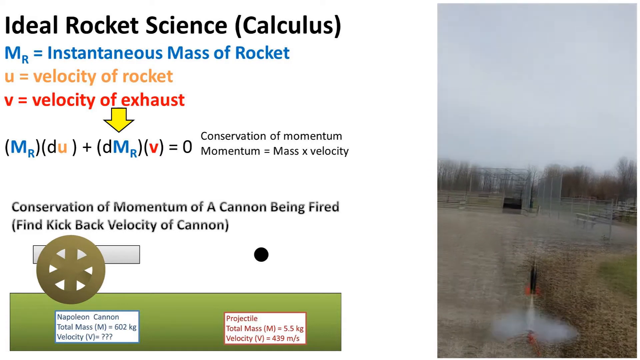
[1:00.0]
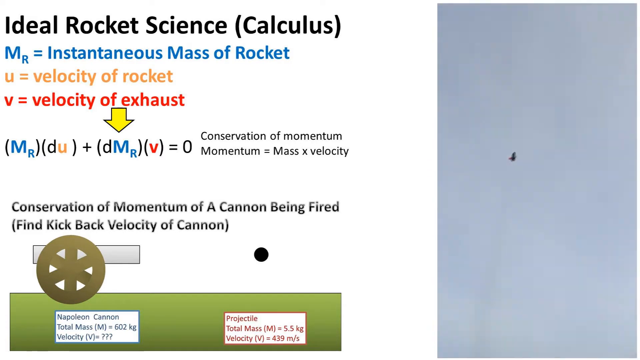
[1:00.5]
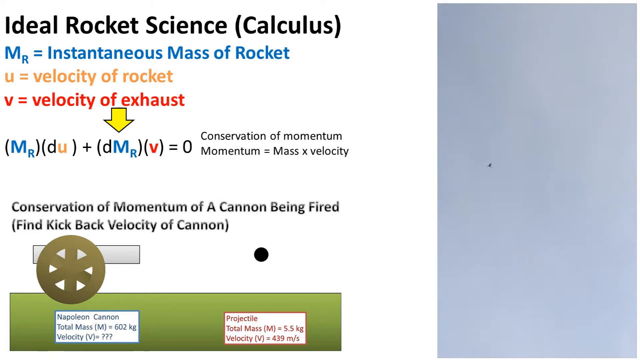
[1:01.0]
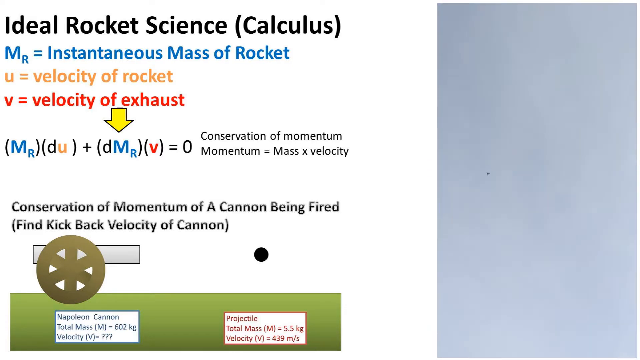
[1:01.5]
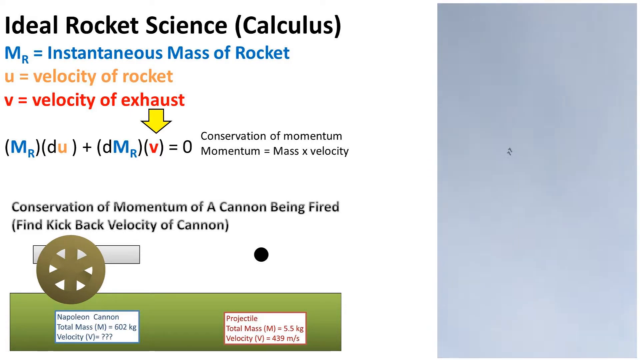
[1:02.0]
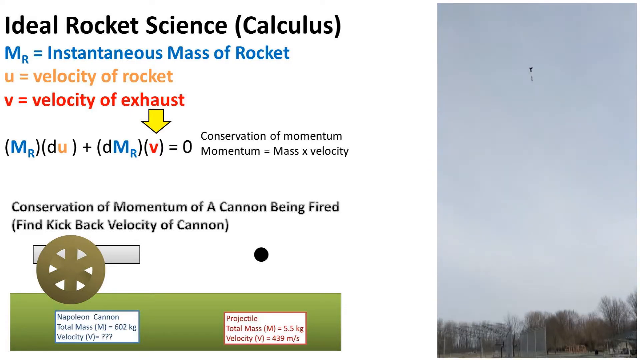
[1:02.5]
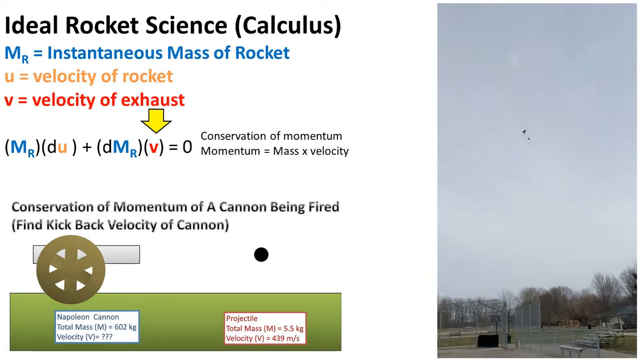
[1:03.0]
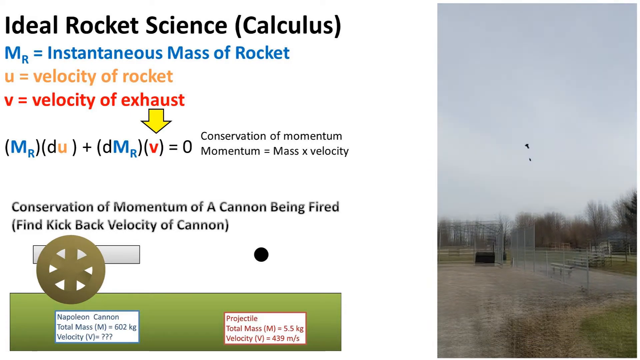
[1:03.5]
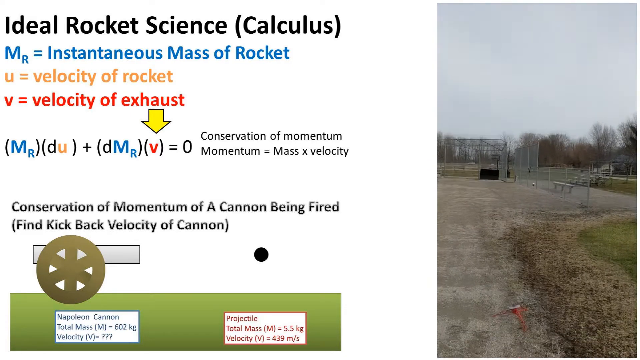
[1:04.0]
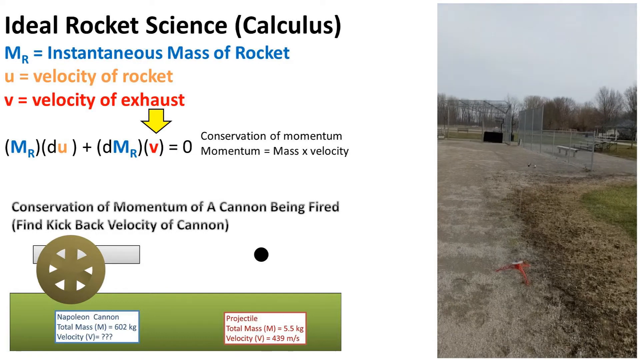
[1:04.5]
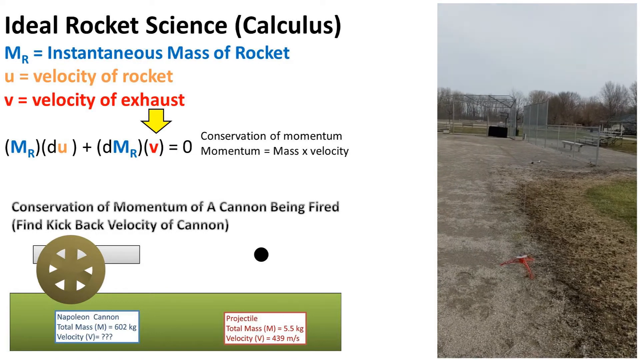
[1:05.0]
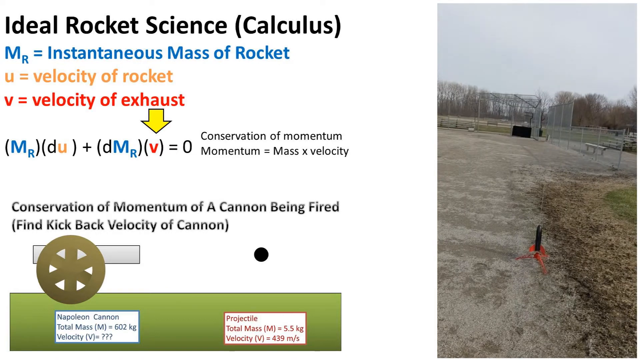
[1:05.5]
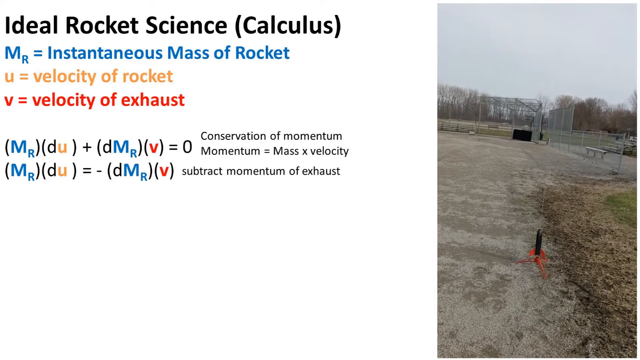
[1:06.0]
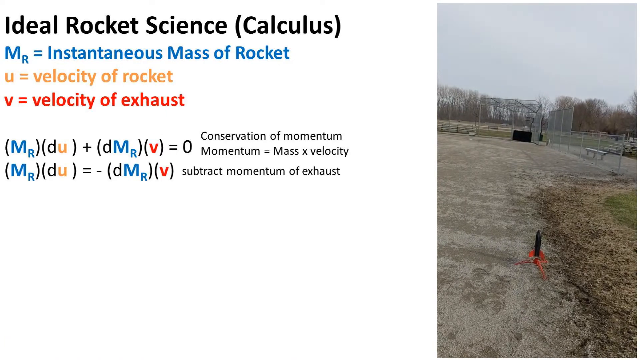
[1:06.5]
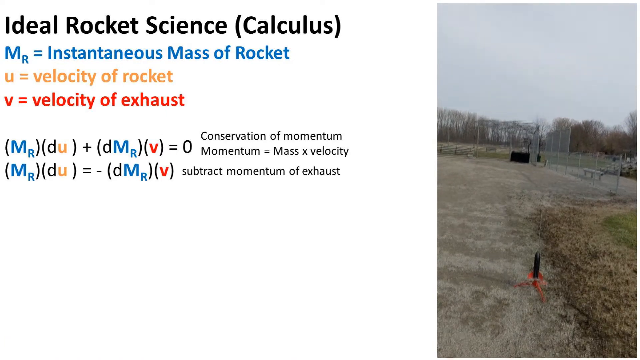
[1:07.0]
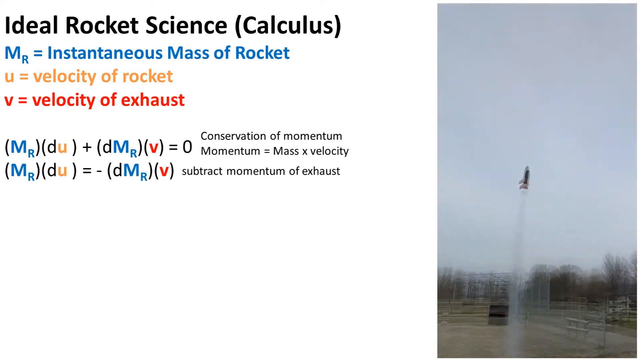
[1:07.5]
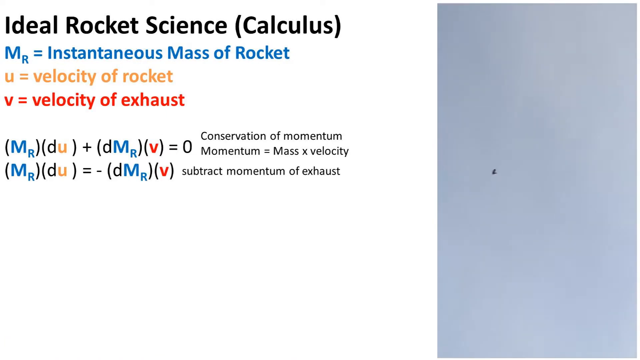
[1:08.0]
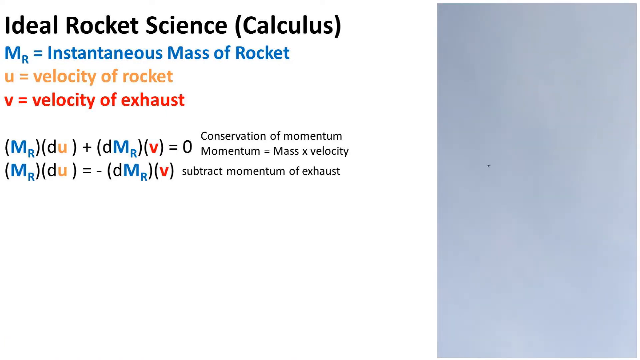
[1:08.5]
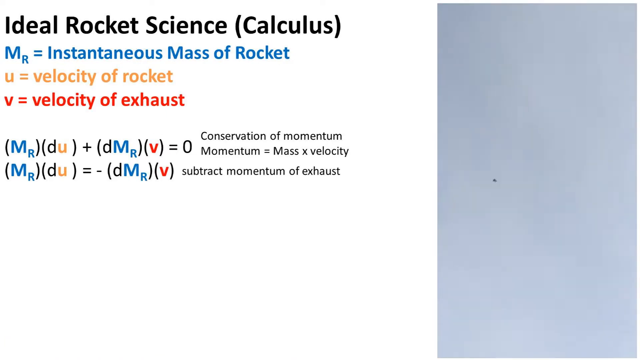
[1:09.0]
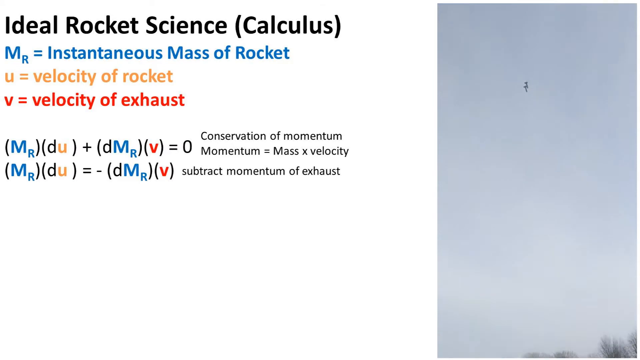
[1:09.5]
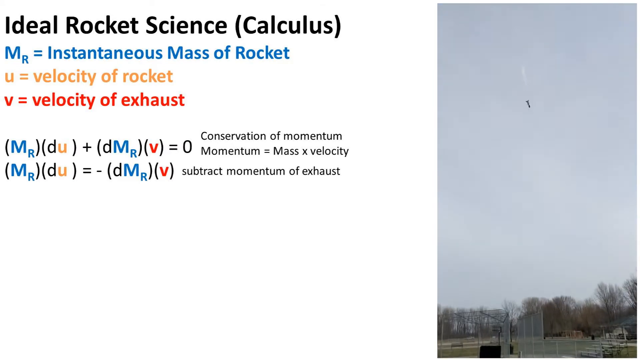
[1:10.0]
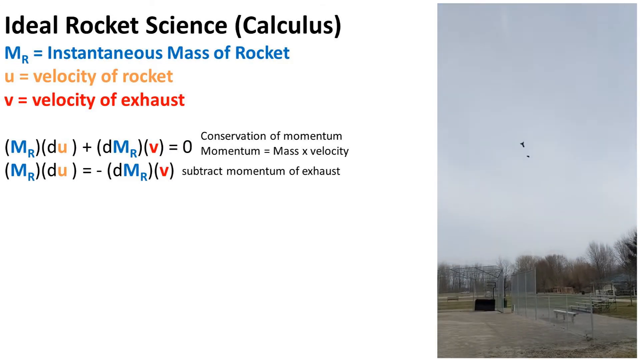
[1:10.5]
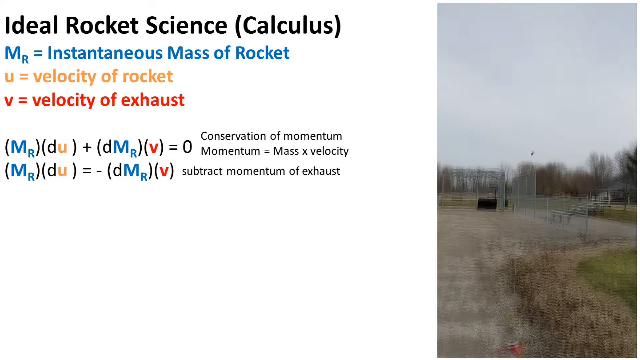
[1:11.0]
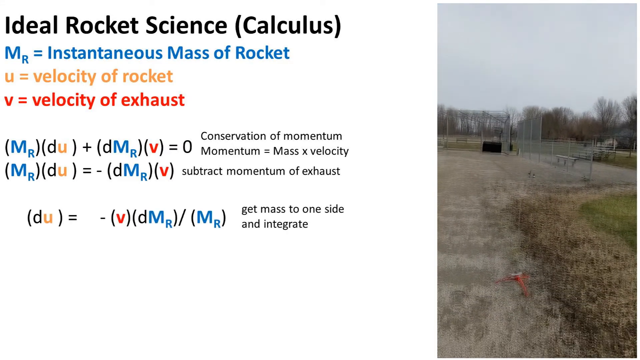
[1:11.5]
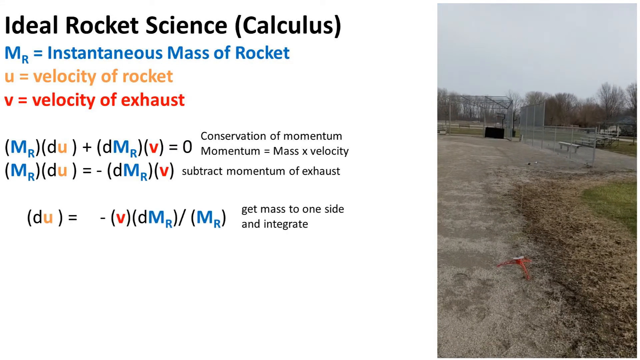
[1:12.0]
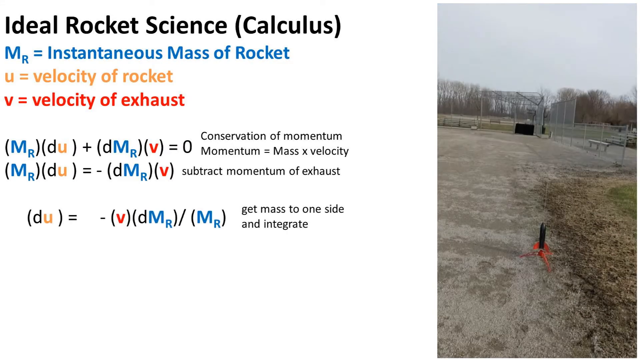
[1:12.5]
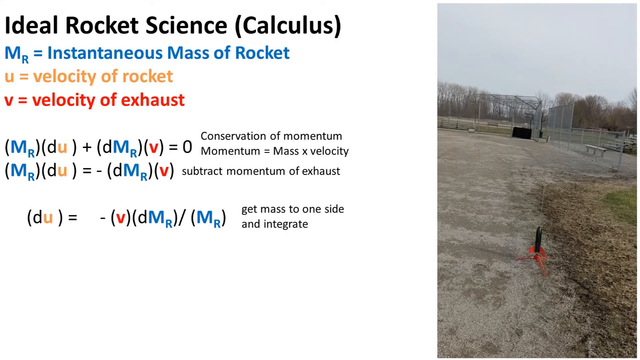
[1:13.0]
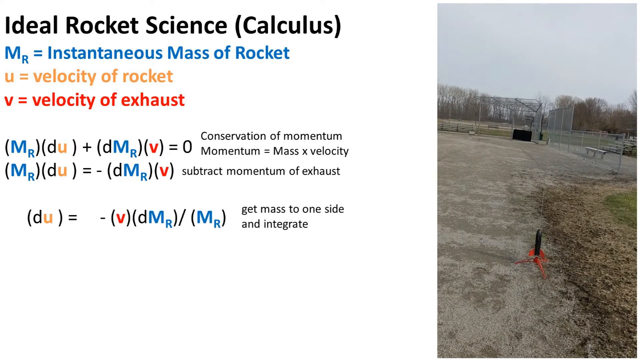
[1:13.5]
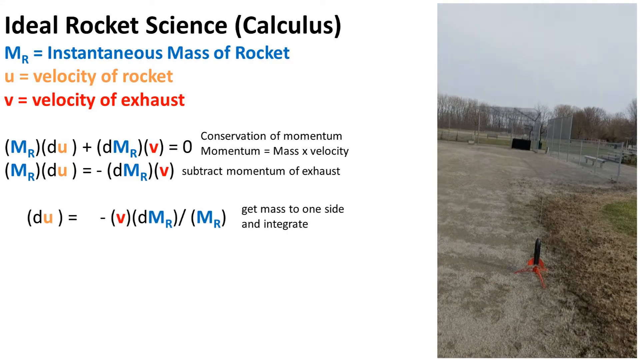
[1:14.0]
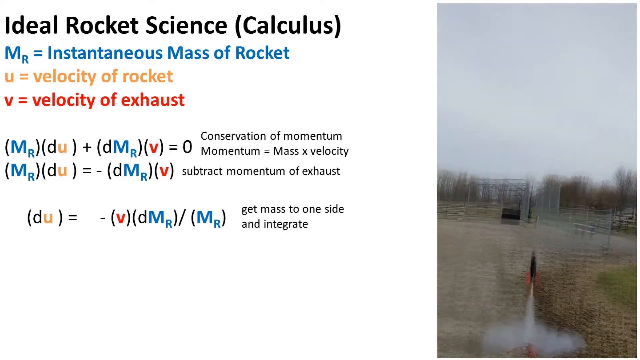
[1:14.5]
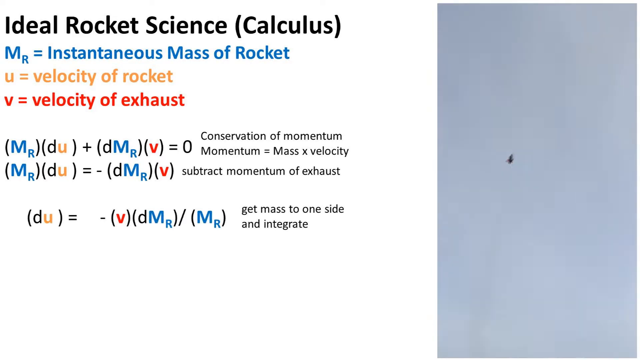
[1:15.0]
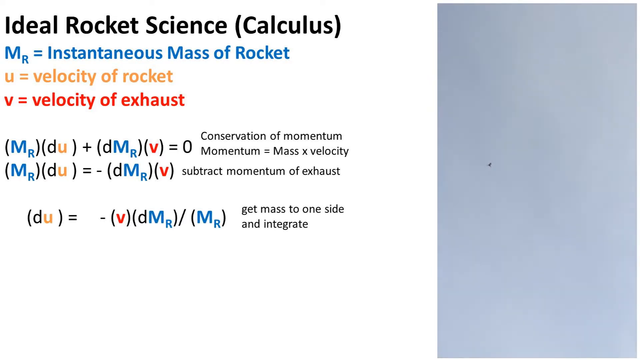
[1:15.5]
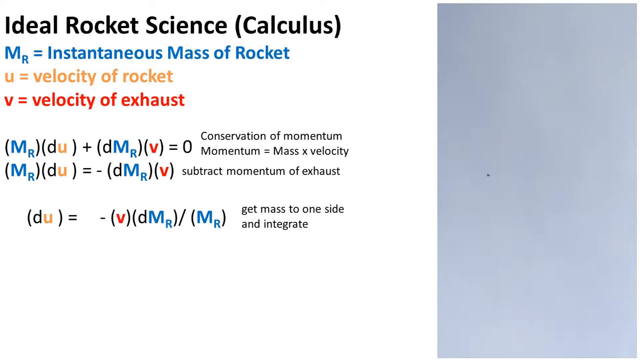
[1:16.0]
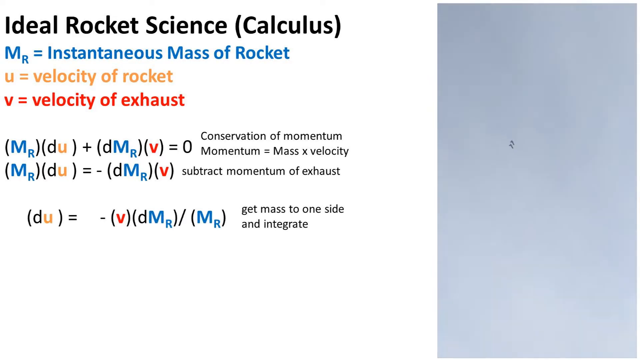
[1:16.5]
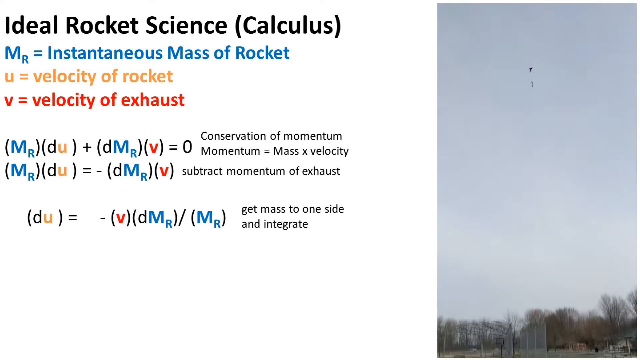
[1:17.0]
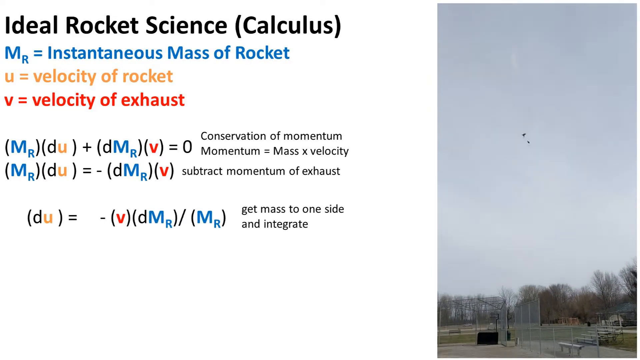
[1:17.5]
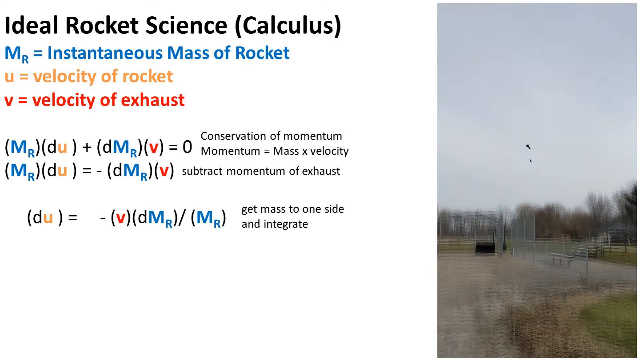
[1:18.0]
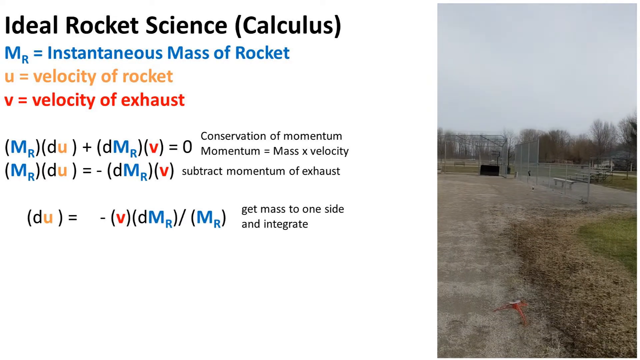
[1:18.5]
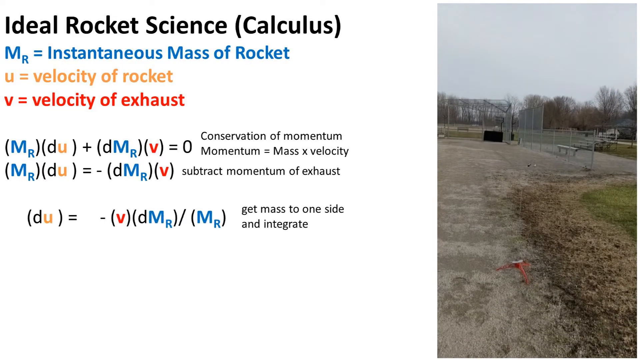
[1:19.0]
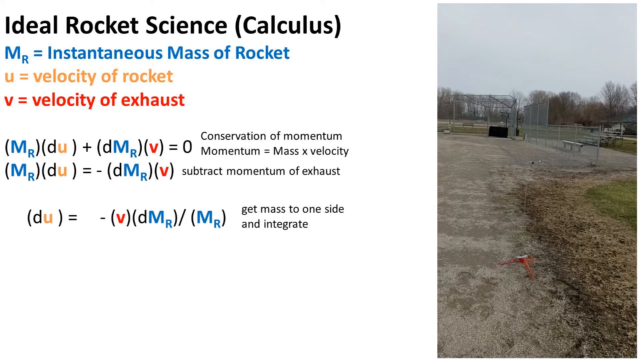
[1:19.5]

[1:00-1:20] The conservation of momentum equation is shown with its three variables: the mass, the velocity of the object, and the velocity of exhaust. Next, the order of operations for calculating a specific variable is shown: first the momentum of the exhaust is subtracted, then the mass of the object is moved to the other side of the equation, isolating the velocity of the object, here the rocket. The resulting equation is the velocity of the rocket equals negative velocity of exhaust times the mass divided by the mass. On the right side of the screen, a looping video shows a small rocket flying dozens of feet into the air and falling back down. The background behind the equation and text on the left side is entirely white.